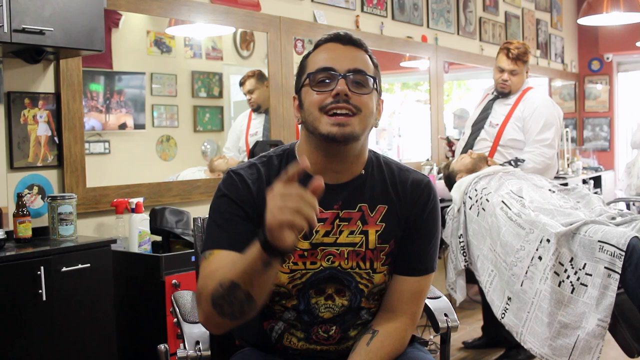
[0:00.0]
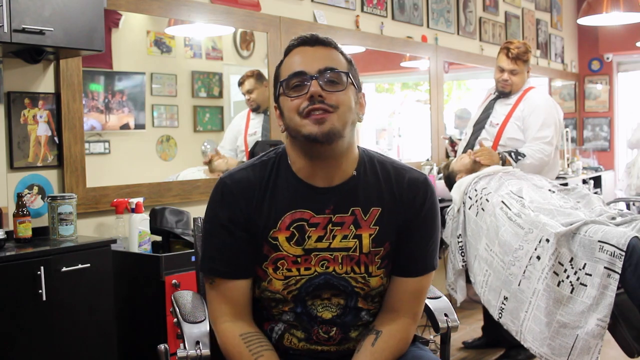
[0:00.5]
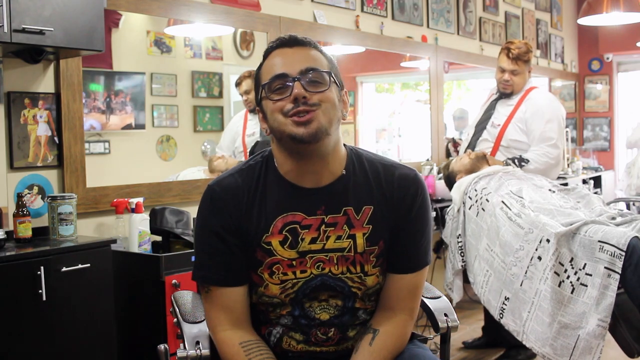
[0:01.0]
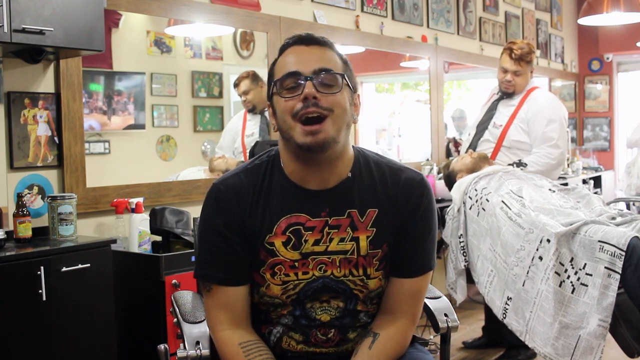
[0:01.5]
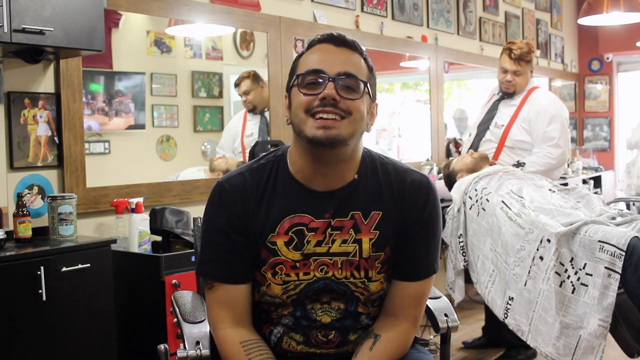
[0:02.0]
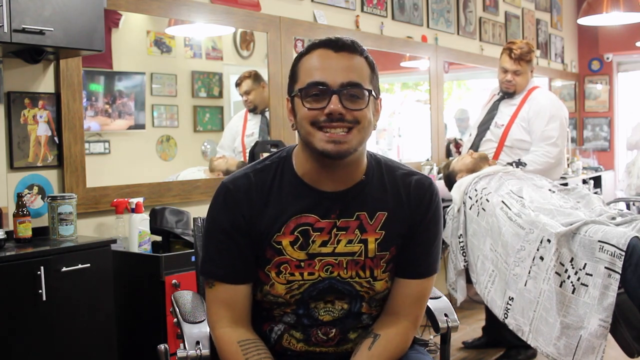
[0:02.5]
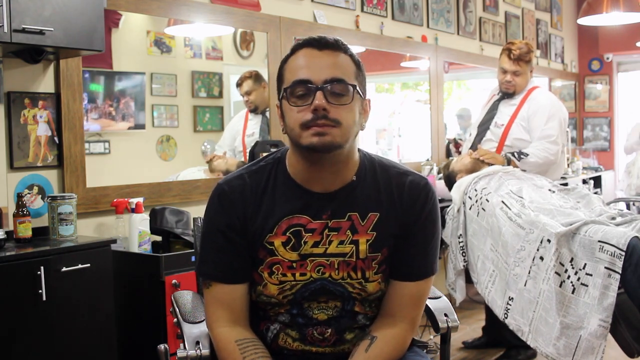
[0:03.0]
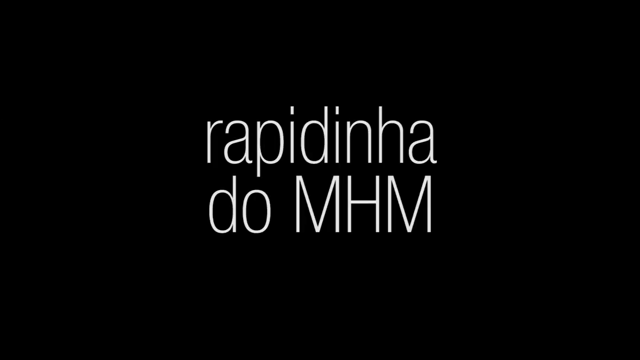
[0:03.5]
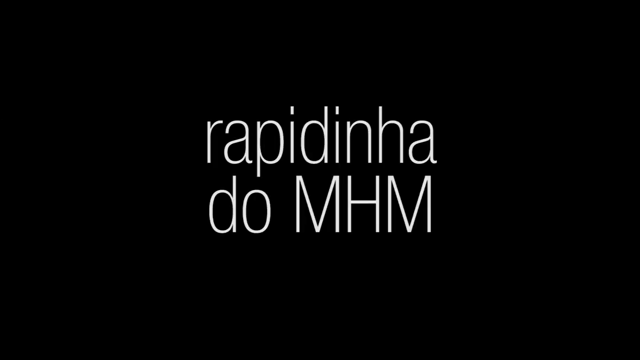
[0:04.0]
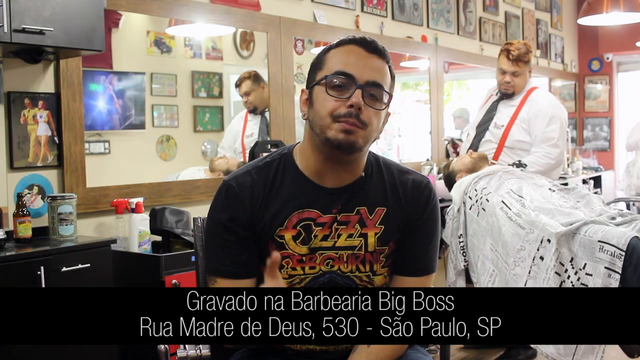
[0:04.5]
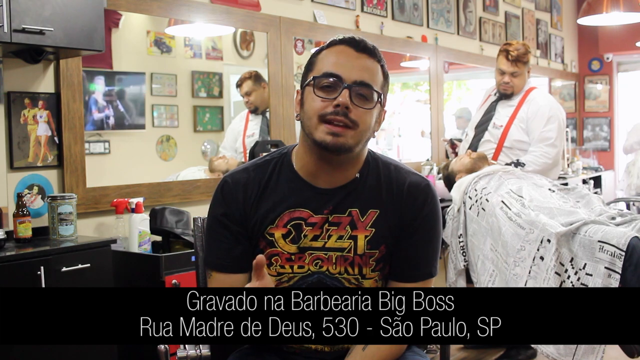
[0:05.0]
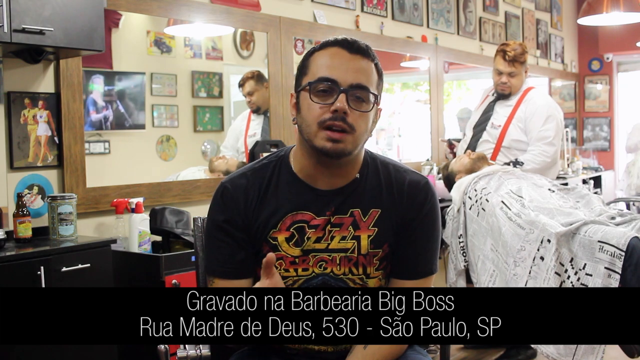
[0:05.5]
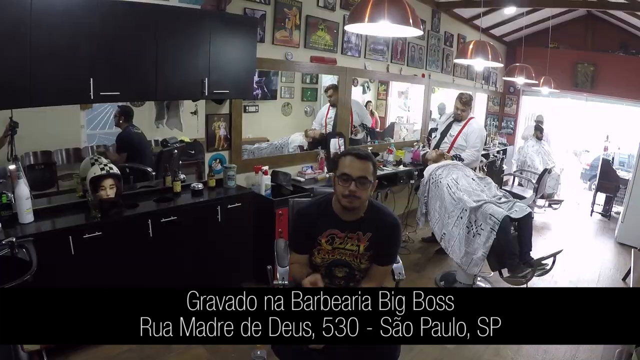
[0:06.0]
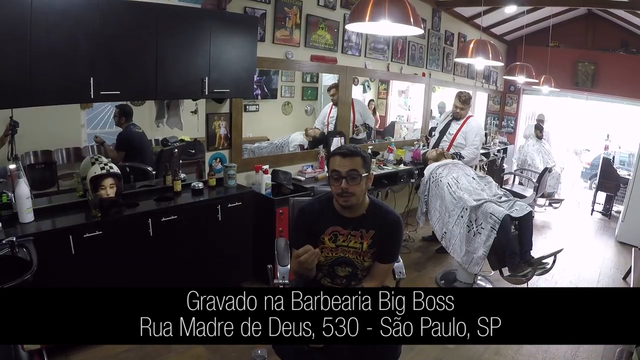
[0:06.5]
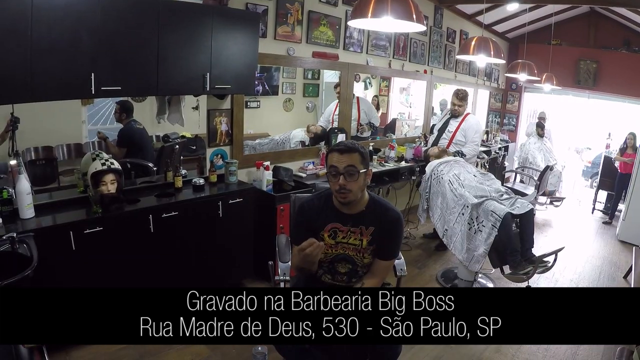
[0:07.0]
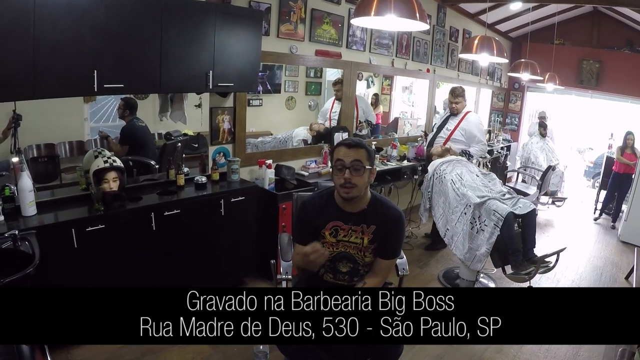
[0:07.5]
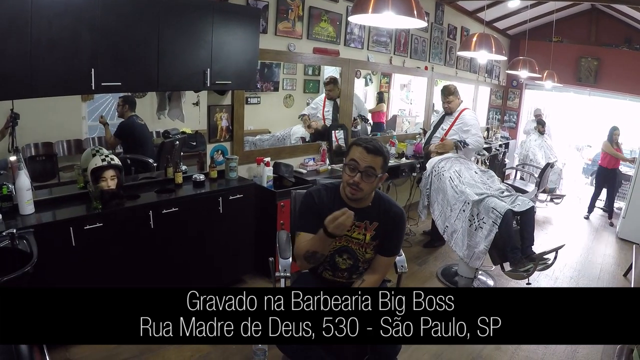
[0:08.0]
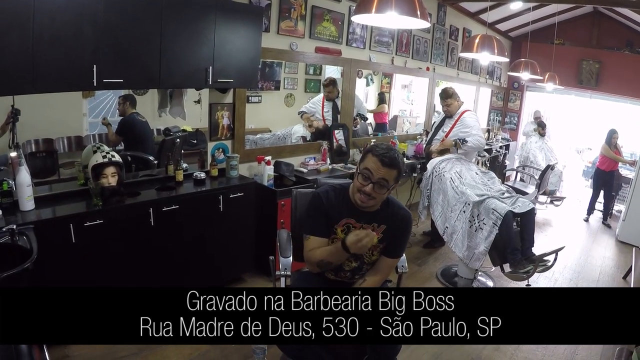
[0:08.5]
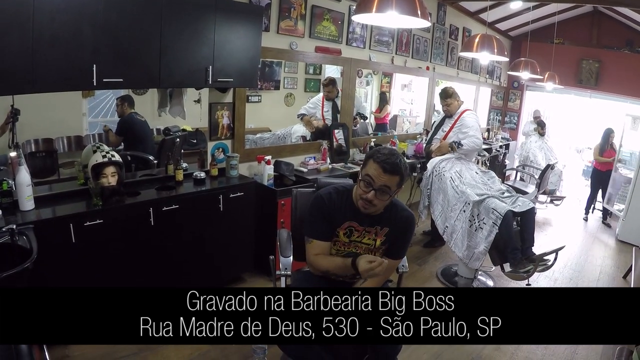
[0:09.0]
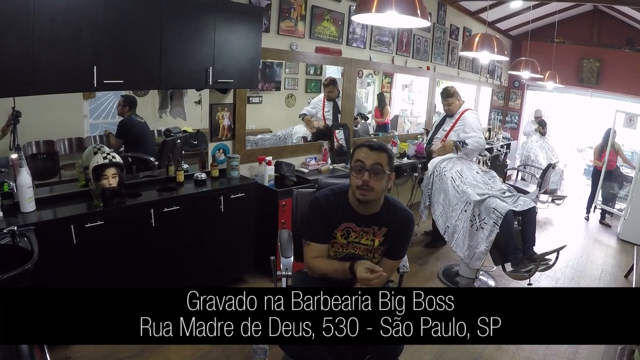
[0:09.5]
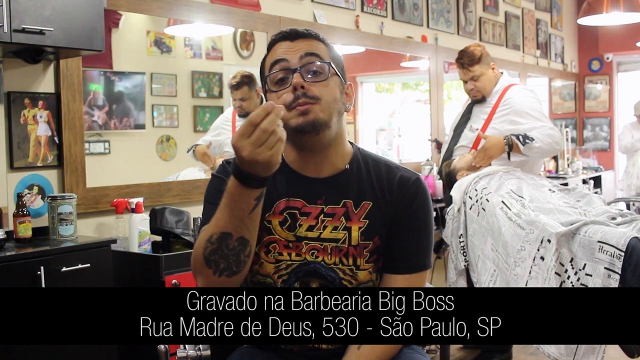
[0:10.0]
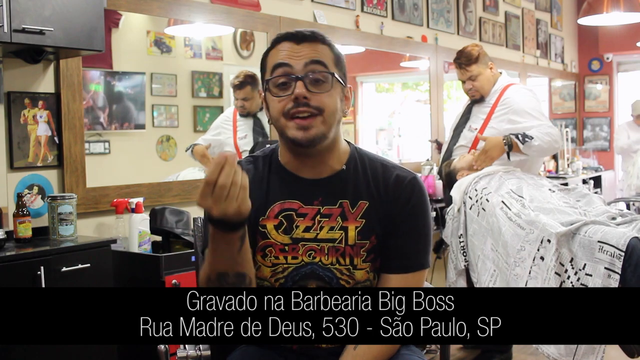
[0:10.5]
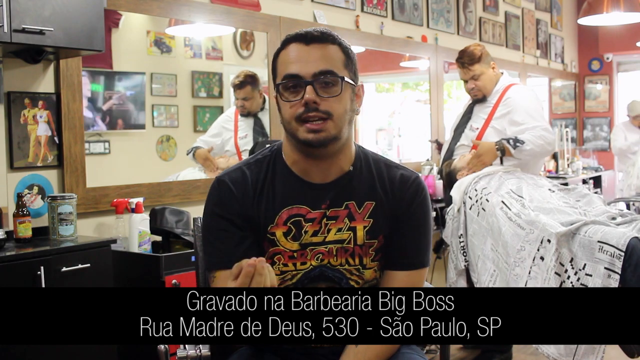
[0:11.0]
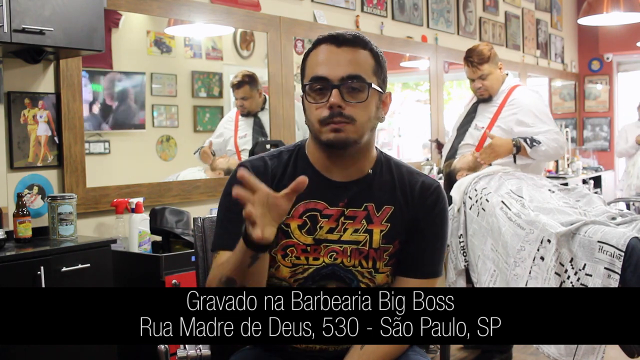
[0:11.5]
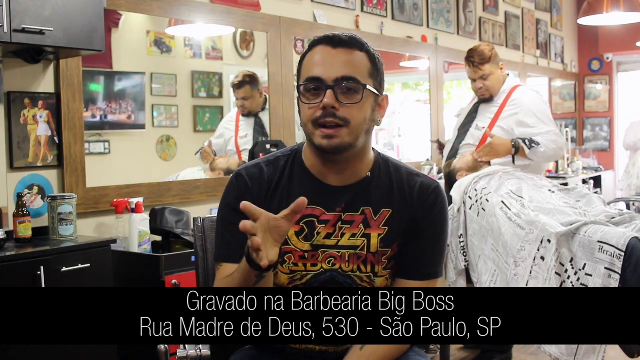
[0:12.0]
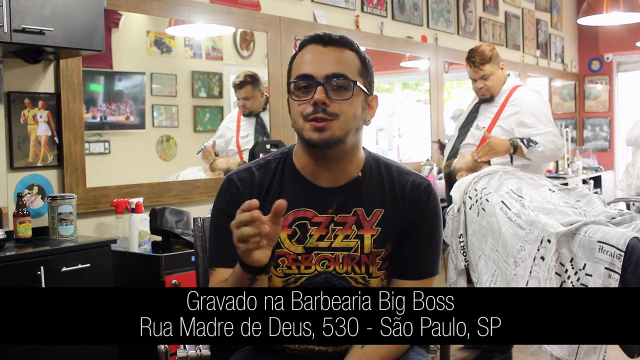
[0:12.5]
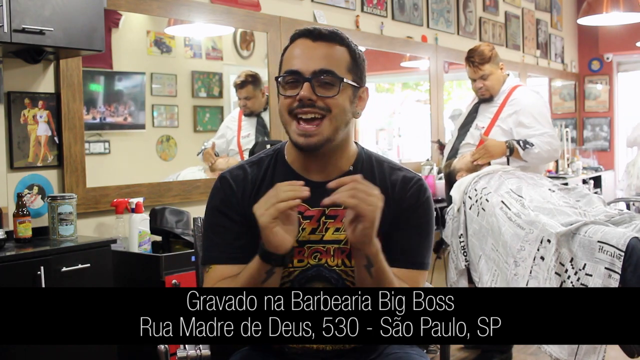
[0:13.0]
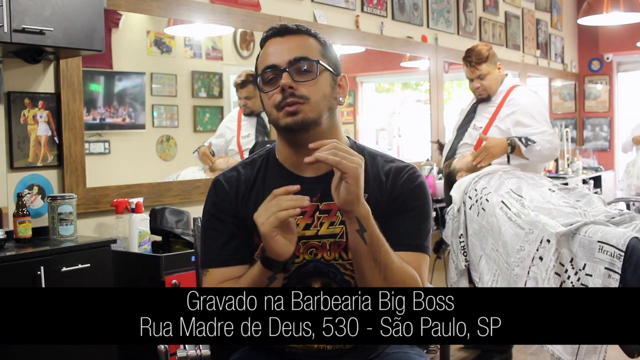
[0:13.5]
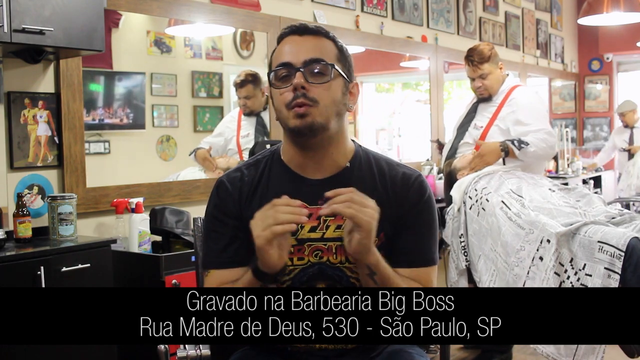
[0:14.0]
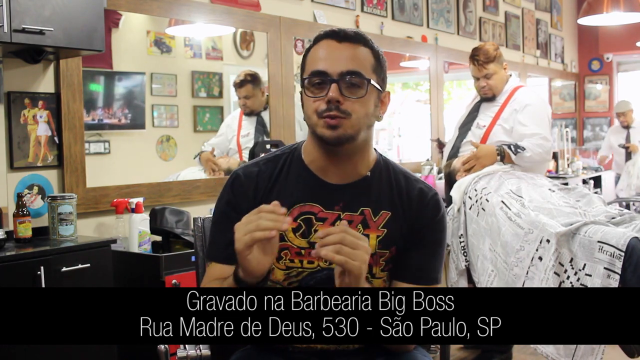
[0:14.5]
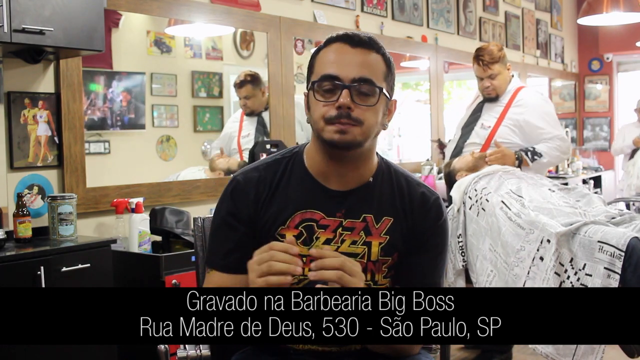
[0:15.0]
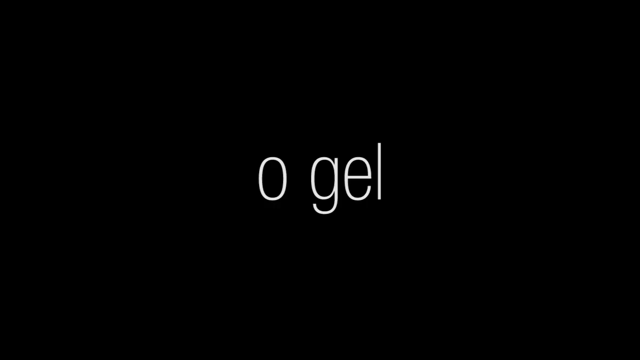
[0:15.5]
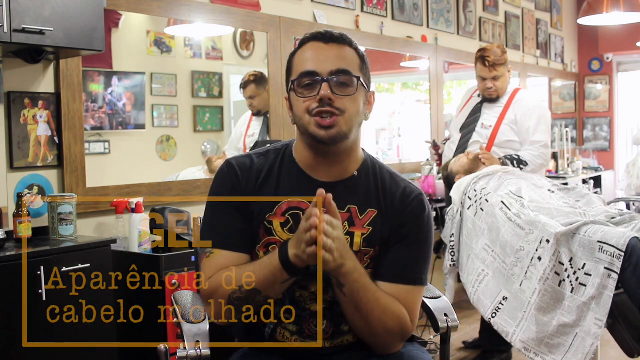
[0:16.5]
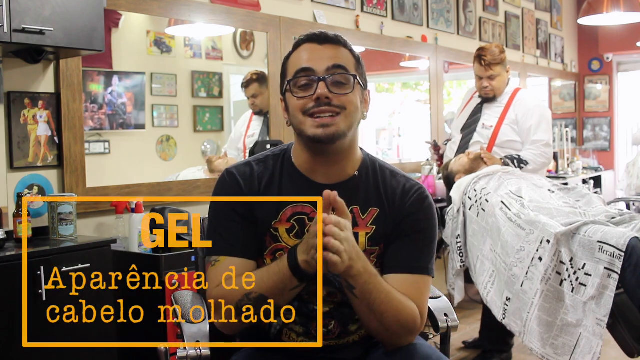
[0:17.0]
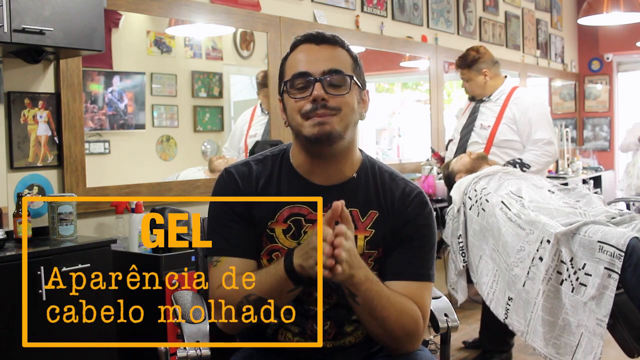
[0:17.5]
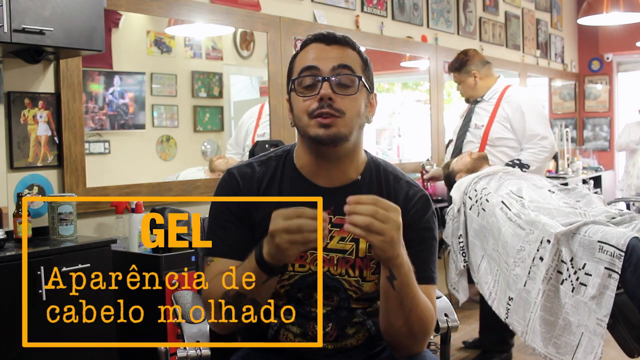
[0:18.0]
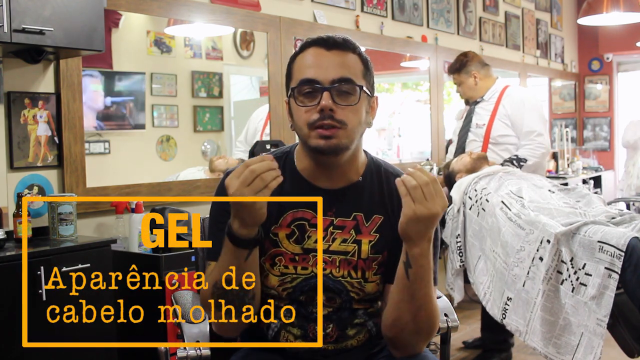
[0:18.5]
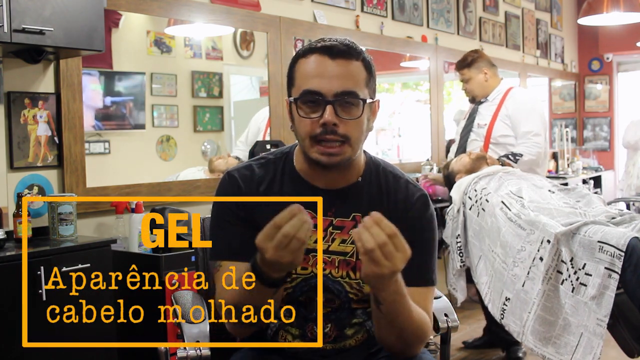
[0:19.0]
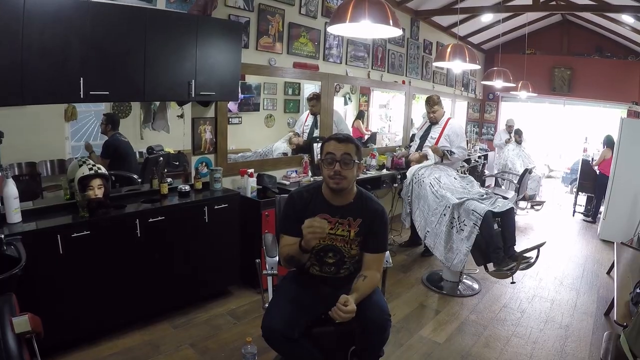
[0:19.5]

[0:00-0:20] A man appears to be recording himself speaking, and behind him a big fat man is either catching somebody or doing something to someone. The place looks like a saloon. In the background a lady is trying to open the fridge, there is a TV in the wall, and picture frames are all over the wall. In the left corner something is written in yellow. The man keeps talking; he wears a black t-shirt and black trousers and is sitting on a chair. A lady in a red t-shirt walks past, and another man in a white shirt opens the fridge and seems to be taking something. The walls are decorated with many picture frames, there are brown carpets in the background, the TV has pictures playing on it, and there are big lights.